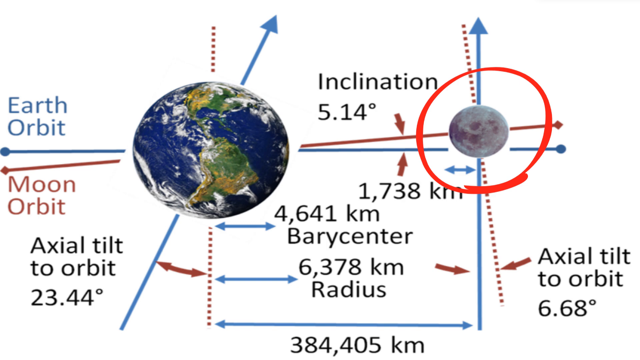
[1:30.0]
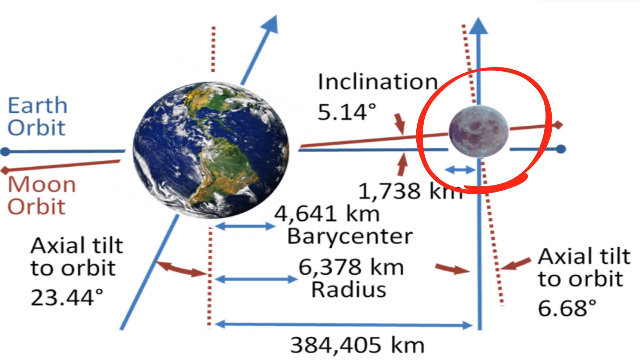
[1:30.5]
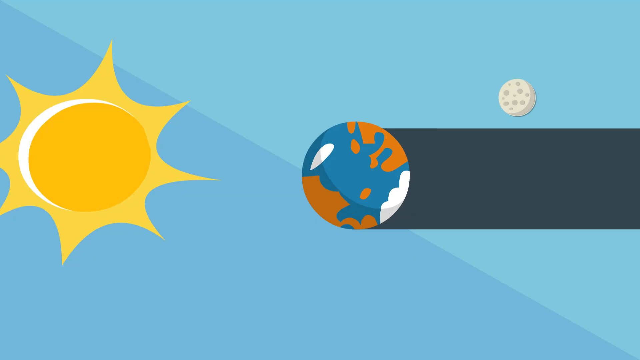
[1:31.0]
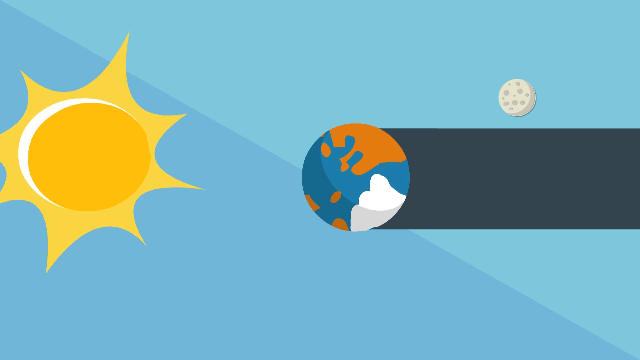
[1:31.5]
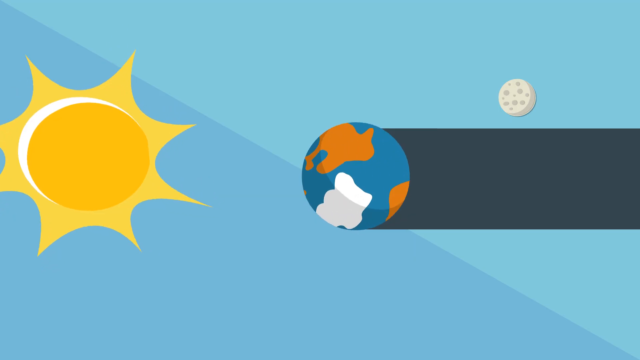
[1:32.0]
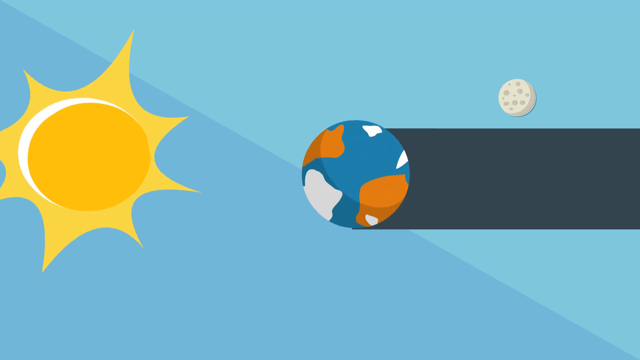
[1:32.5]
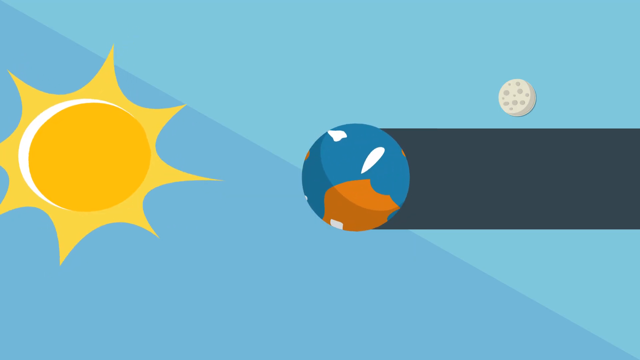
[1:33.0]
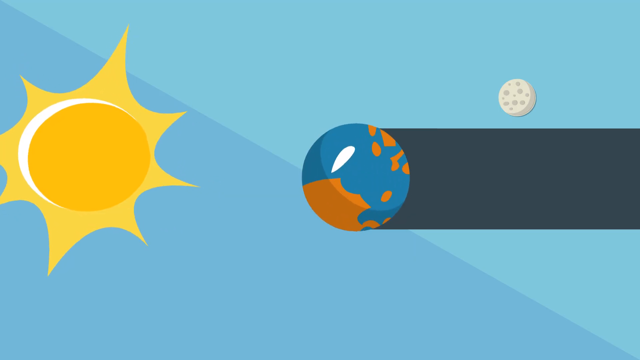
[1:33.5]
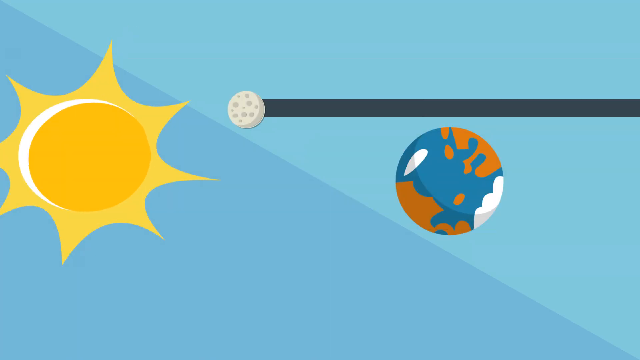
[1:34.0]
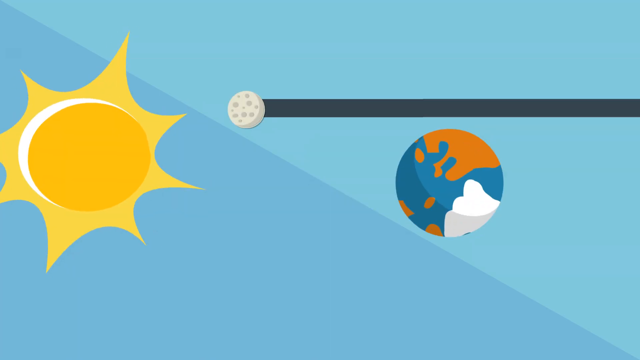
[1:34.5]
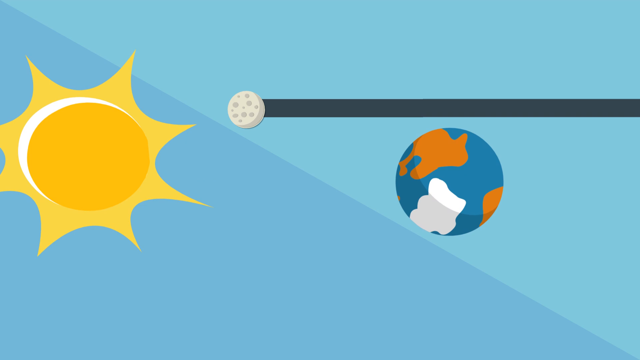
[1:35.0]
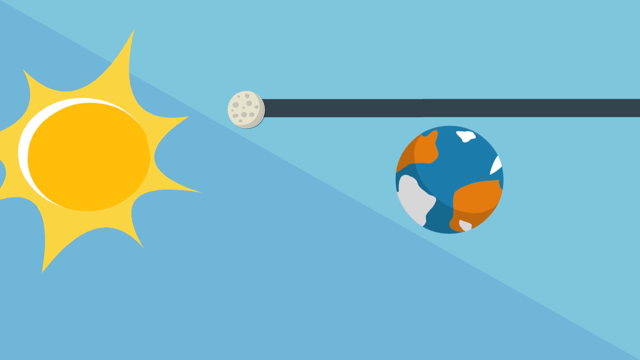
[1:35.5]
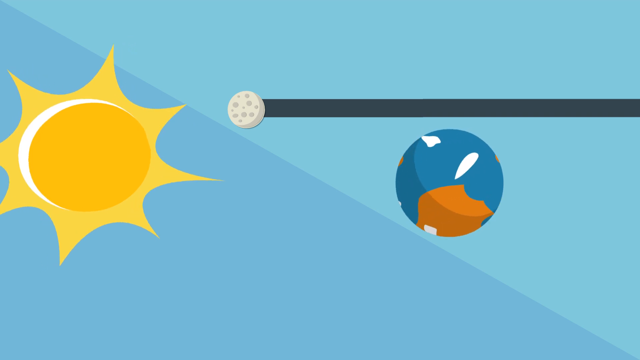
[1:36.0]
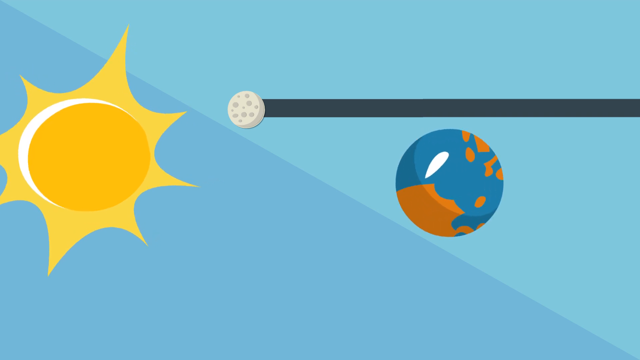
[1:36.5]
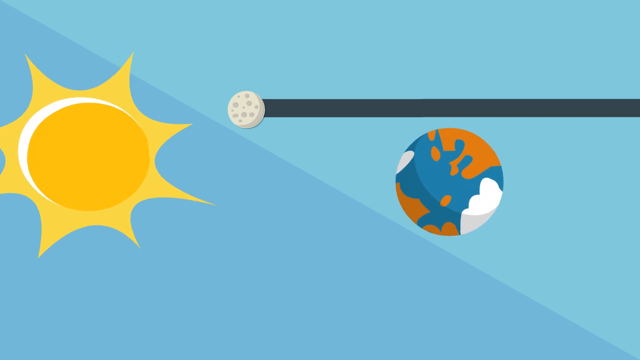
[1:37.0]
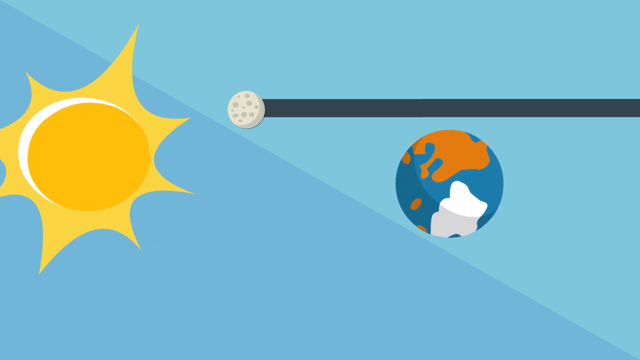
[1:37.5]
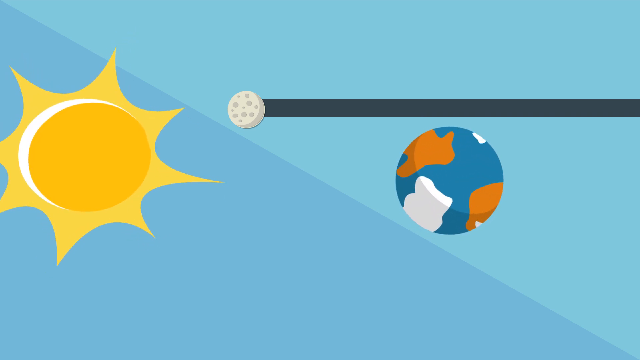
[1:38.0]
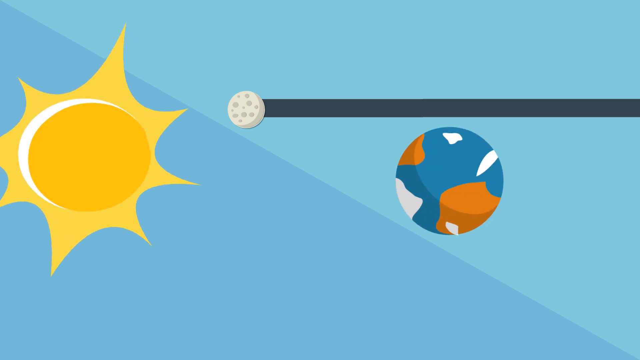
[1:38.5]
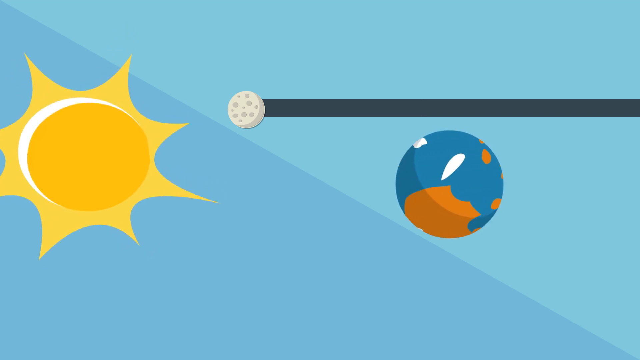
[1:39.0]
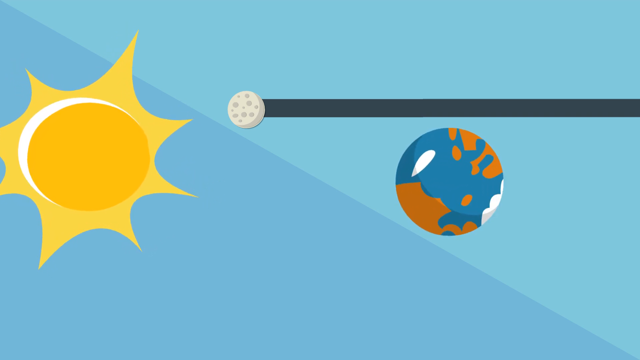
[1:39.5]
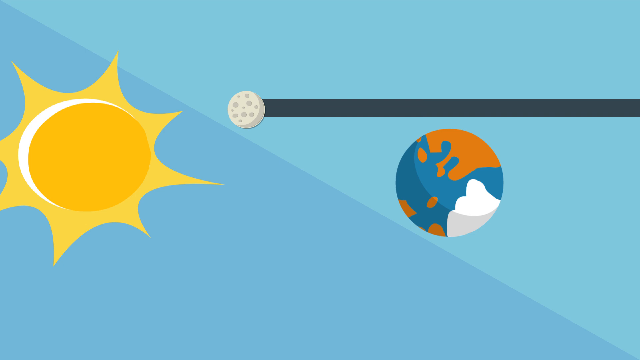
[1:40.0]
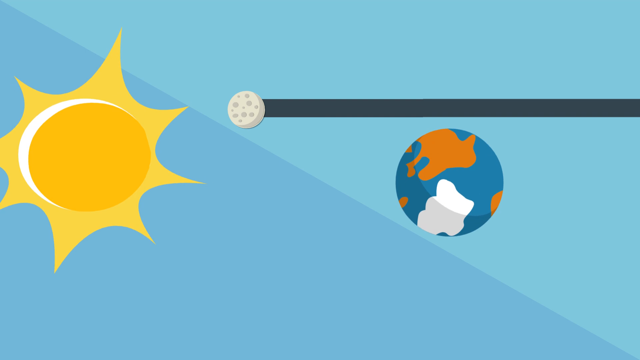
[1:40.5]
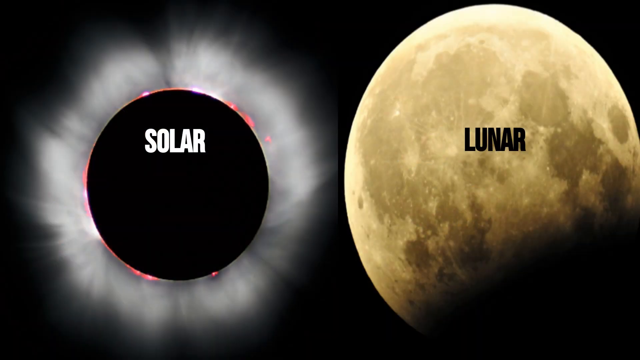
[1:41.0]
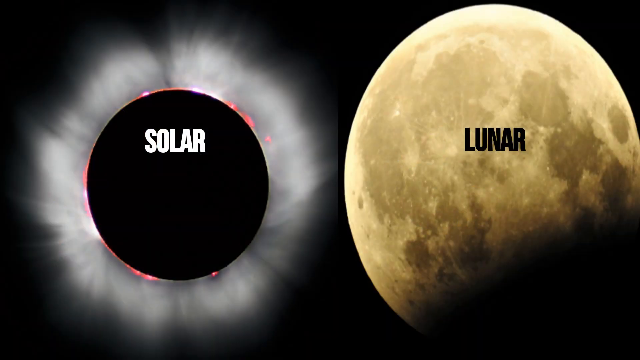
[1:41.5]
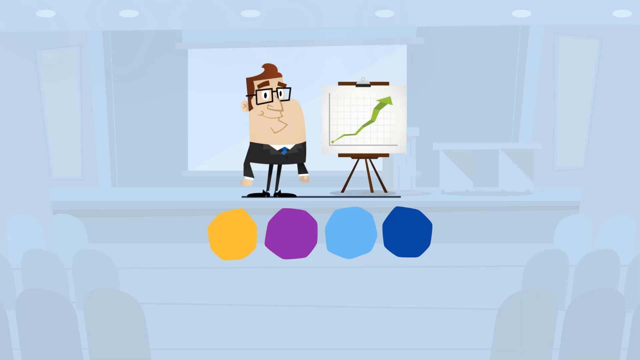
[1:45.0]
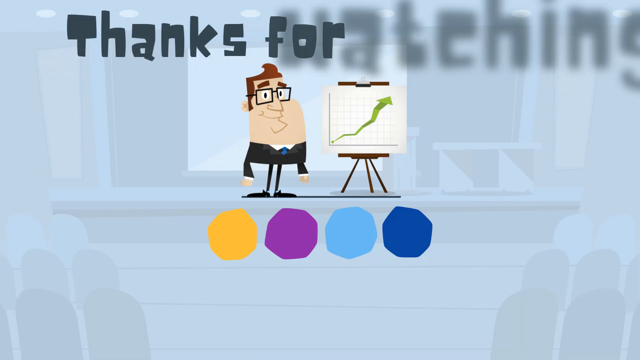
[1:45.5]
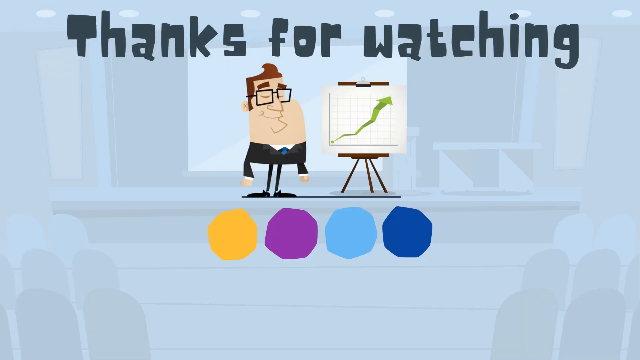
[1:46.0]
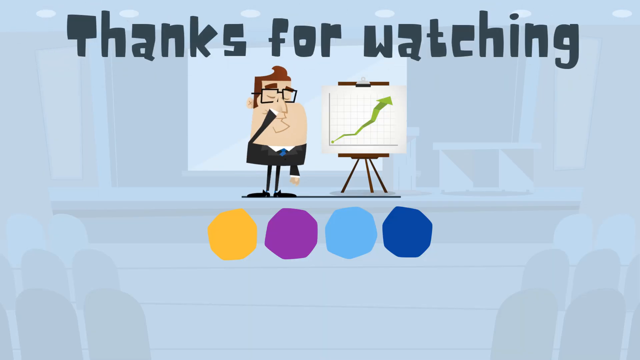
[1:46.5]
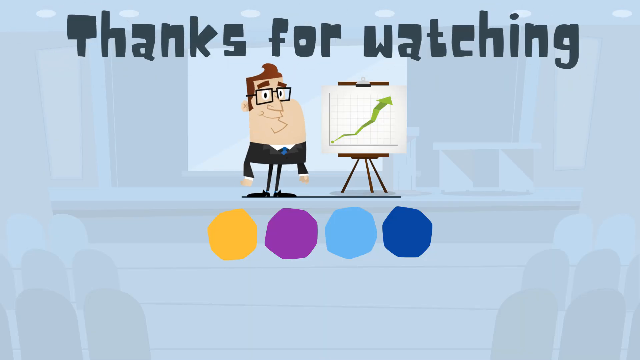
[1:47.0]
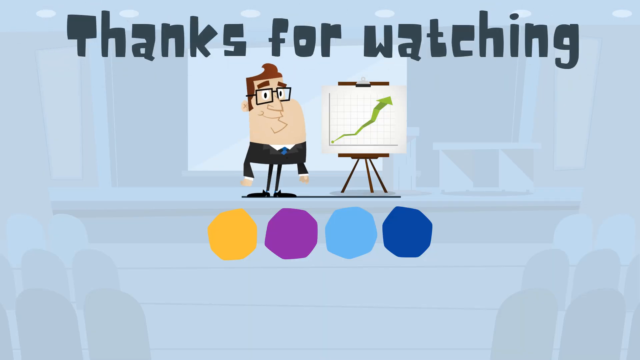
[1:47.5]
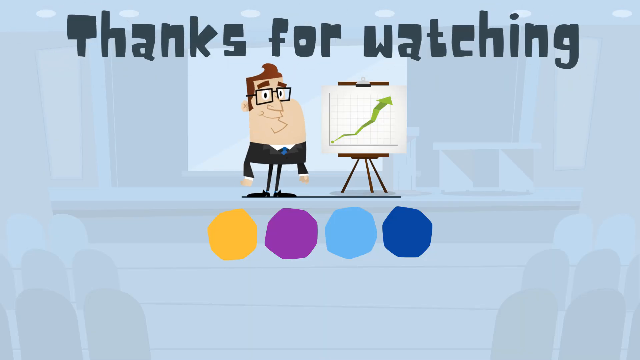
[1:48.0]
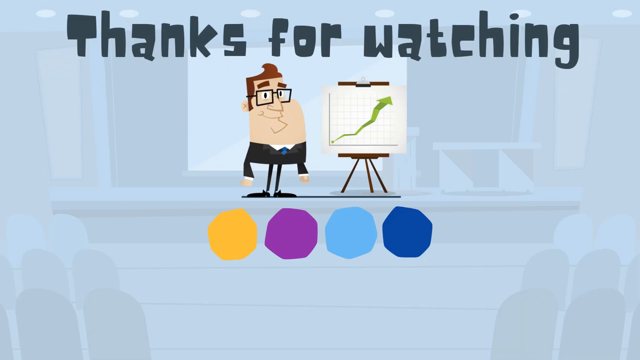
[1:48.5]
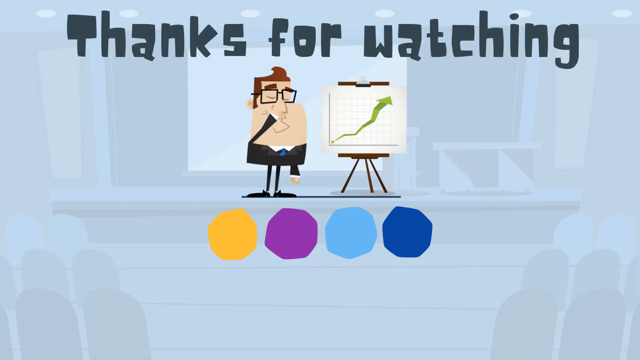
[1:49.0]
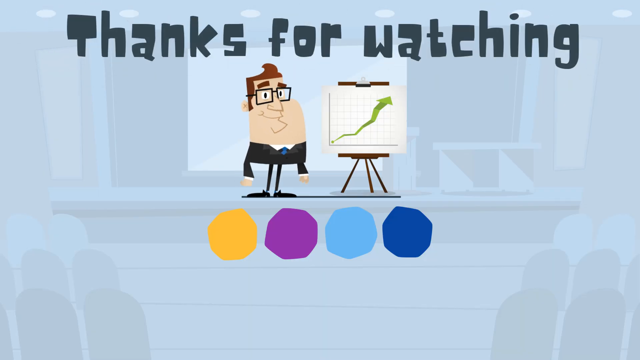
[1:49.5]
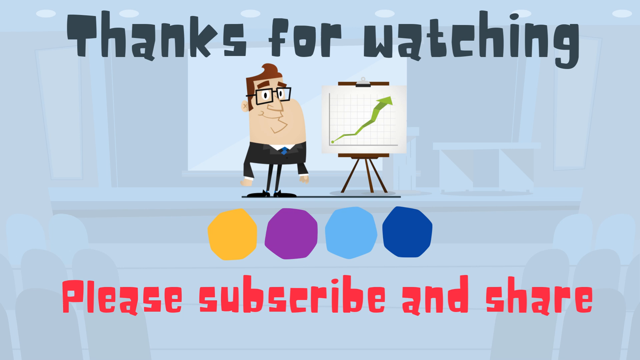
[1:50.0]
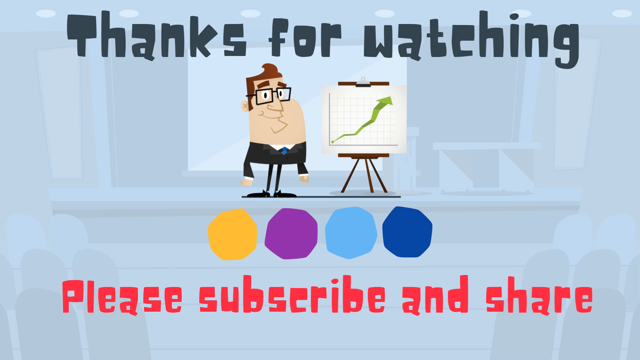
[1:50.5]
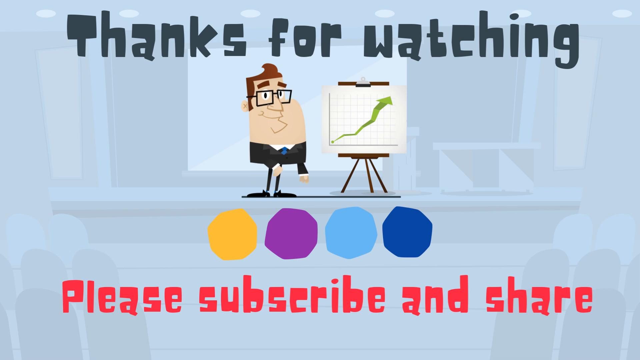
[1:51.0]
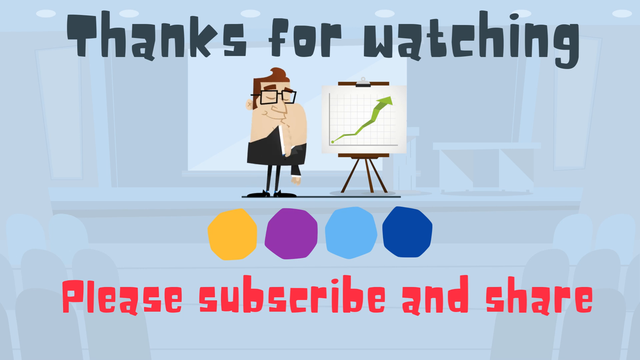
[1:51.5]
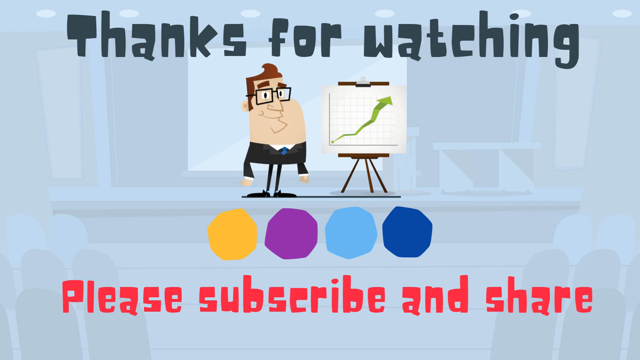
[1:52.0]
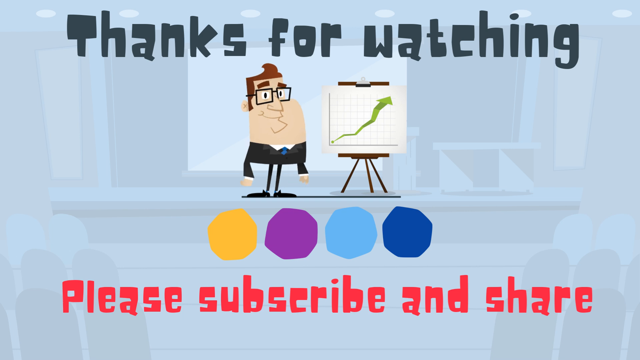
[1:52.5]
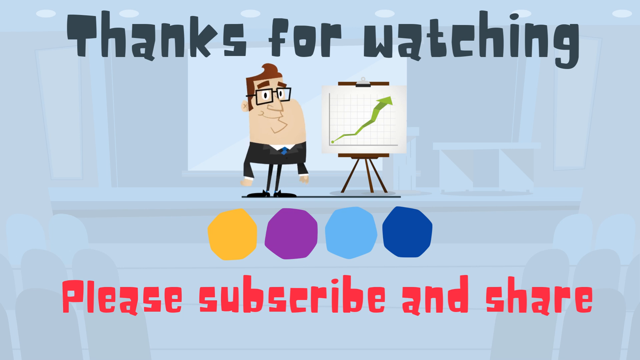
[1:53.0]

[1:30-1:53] A picture of the Earth is on the left and a picture of the moon on the right, with blue and red arrows and a red circle around the moon. Written labels include "Earth orbit," "Moon orbit," "axial tilt to orbit 23.44 degrees" and "inclination 5.14." Underneath are "1,738 kilometers" and "4,641 kilometers" with "barycenter," below that "6,378 kilometers" with "radius," and finally "axis tilt to orbit" with 6.68 degrees. The video then goes back to the rendition of the sun on the left, the Earth on the right, and the moon above and to the right of the Earth.